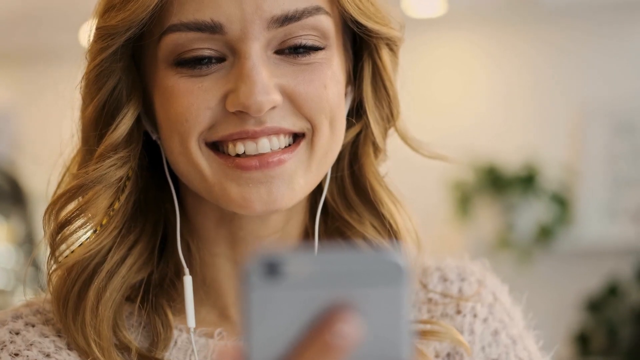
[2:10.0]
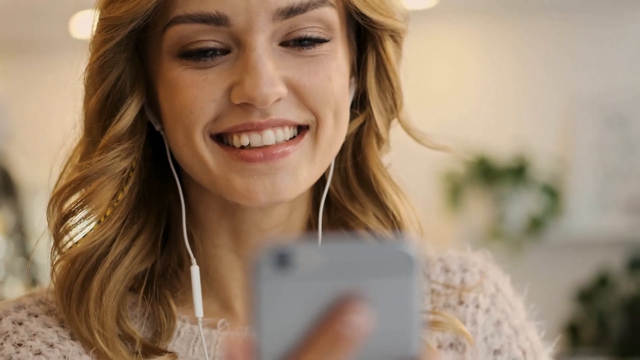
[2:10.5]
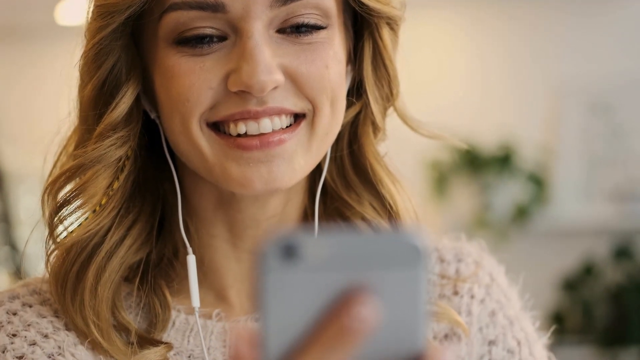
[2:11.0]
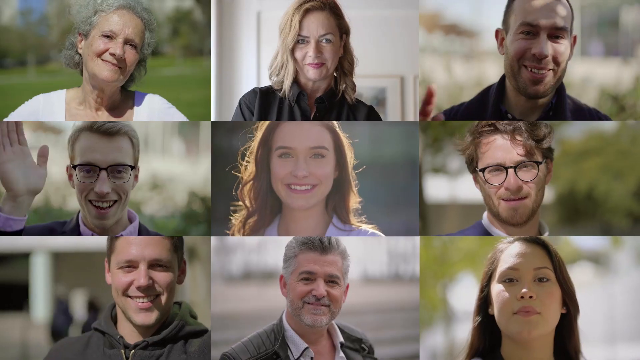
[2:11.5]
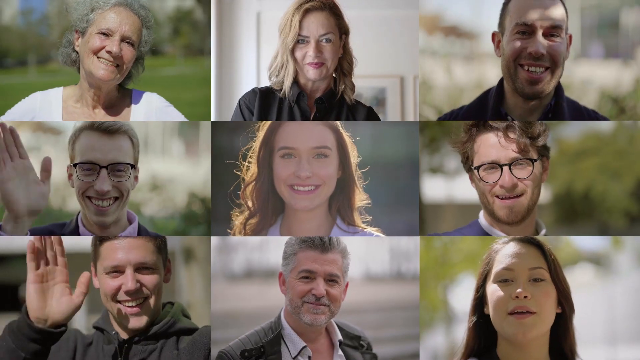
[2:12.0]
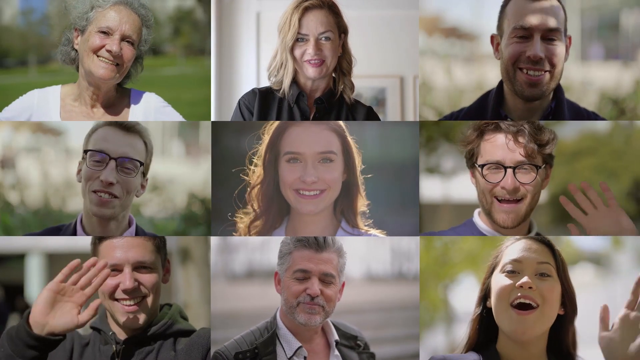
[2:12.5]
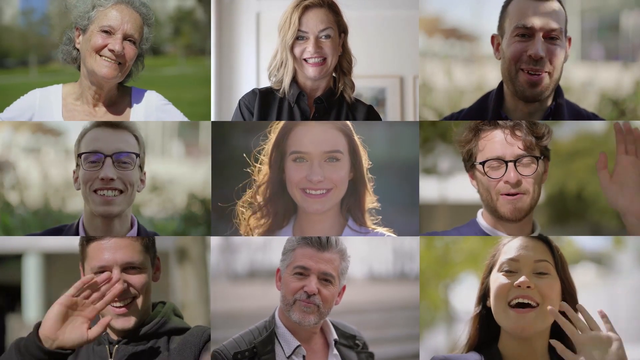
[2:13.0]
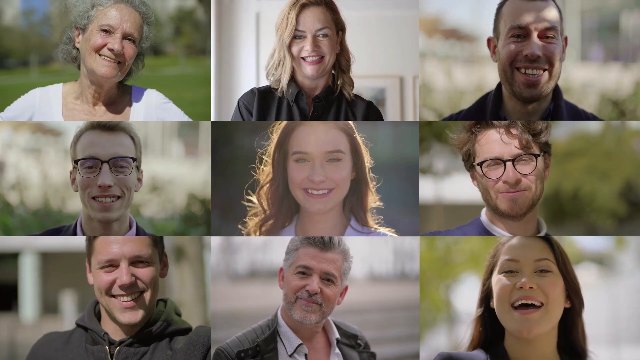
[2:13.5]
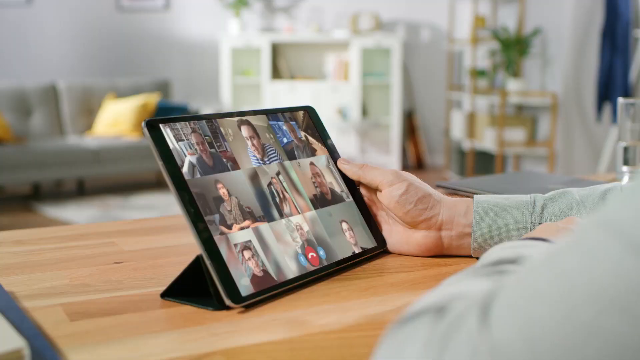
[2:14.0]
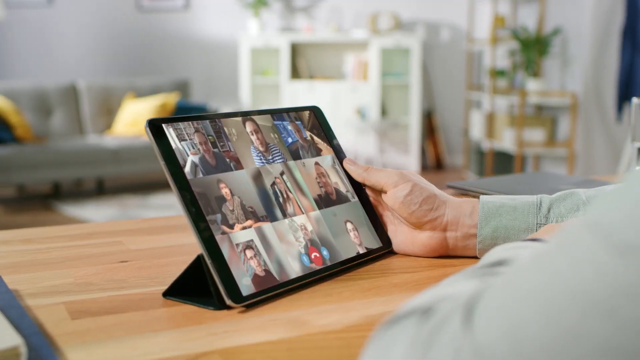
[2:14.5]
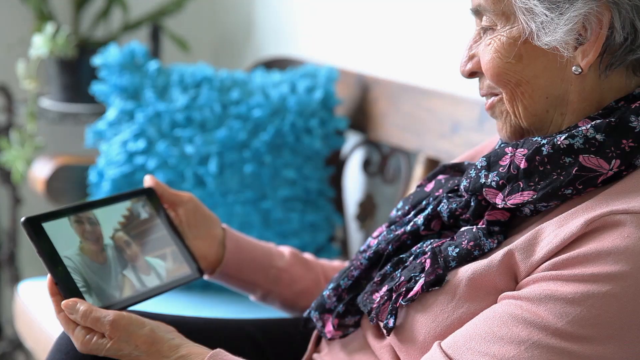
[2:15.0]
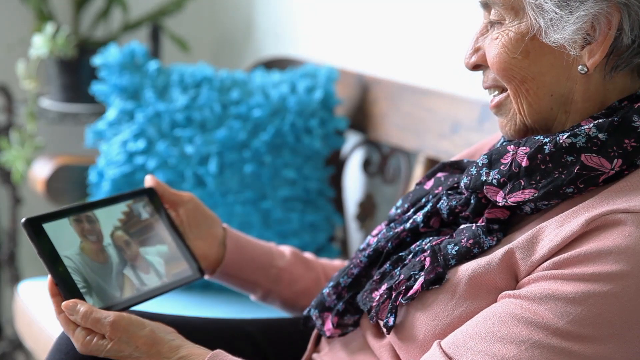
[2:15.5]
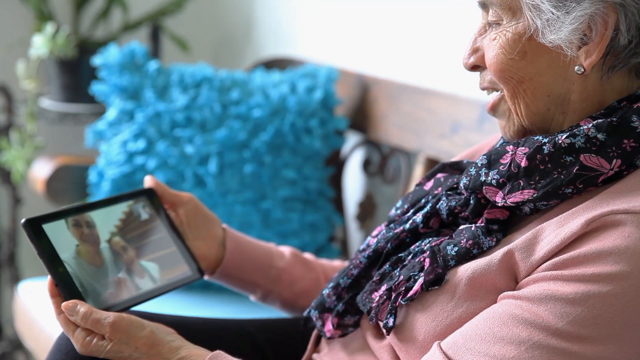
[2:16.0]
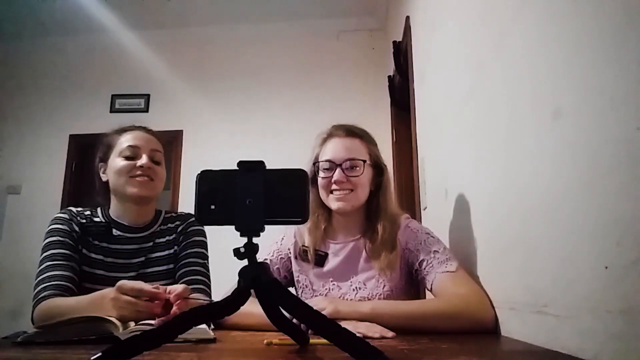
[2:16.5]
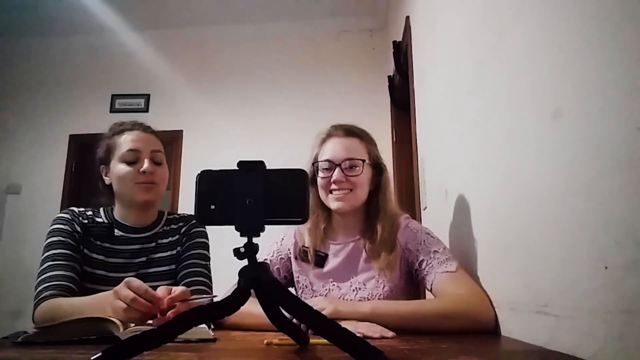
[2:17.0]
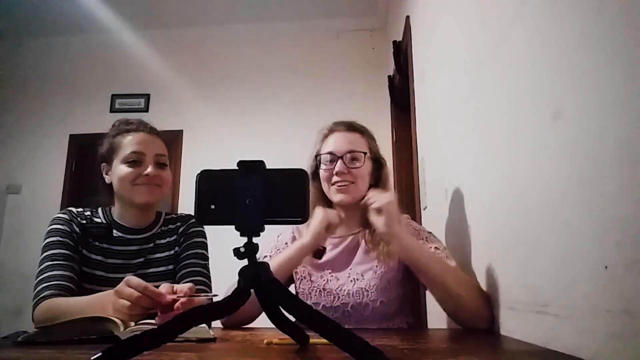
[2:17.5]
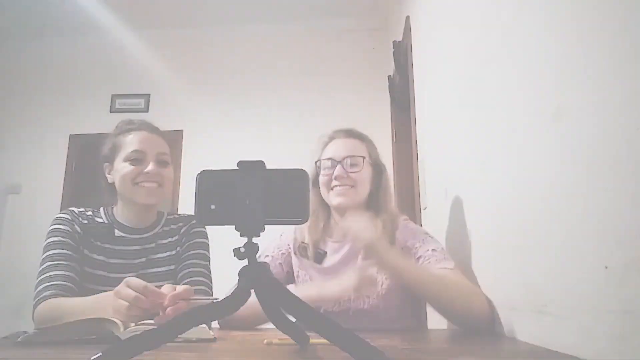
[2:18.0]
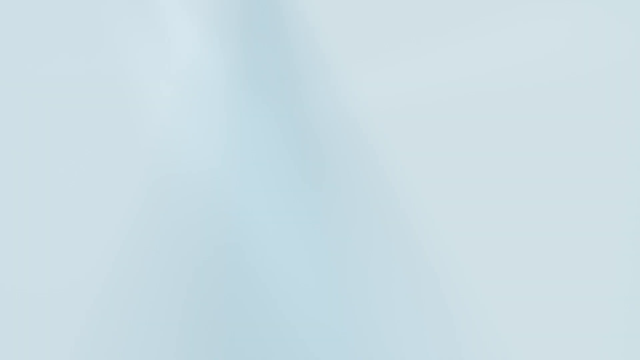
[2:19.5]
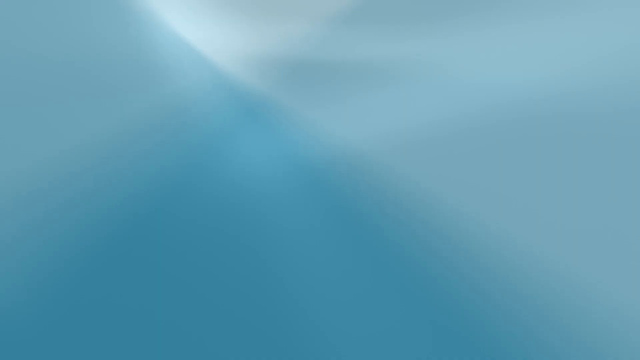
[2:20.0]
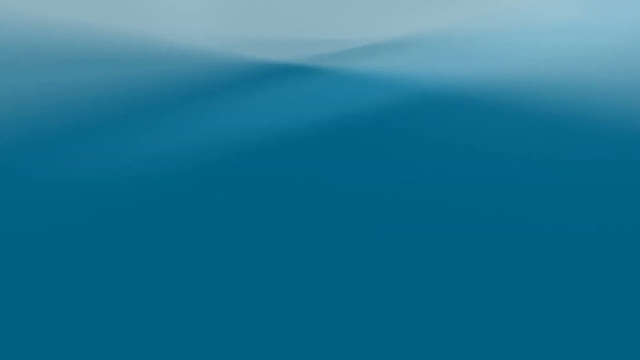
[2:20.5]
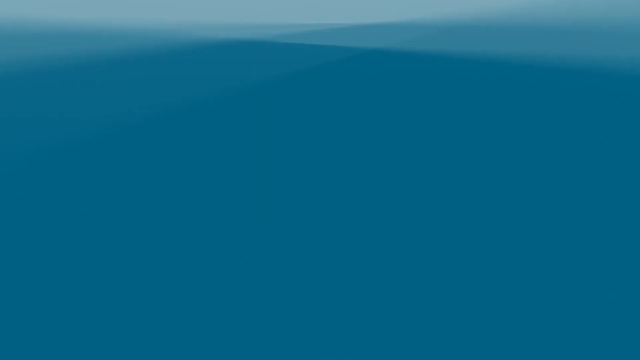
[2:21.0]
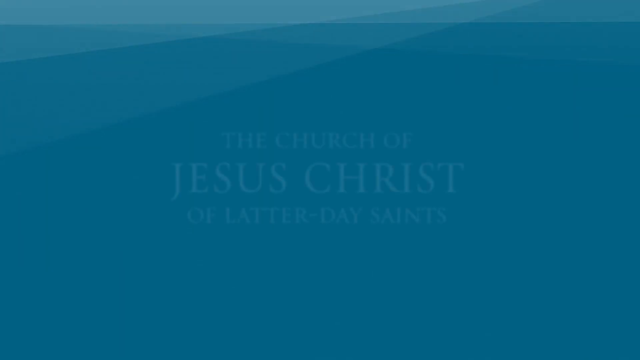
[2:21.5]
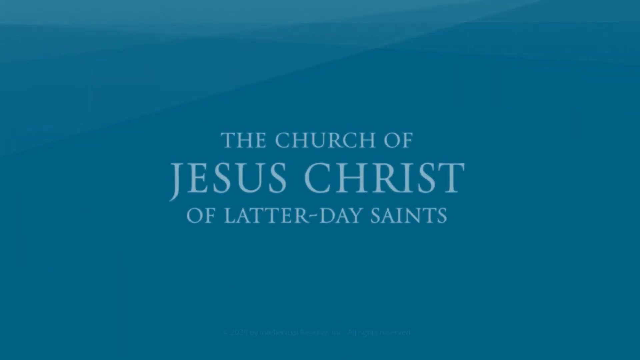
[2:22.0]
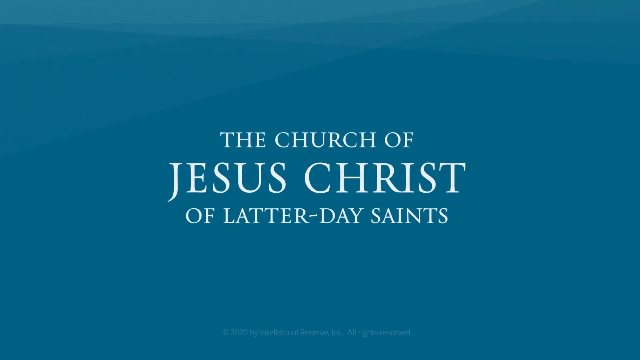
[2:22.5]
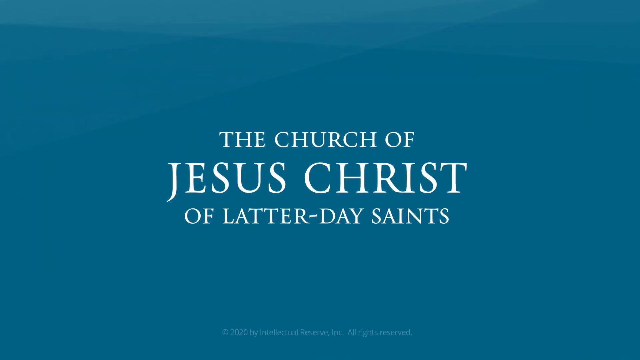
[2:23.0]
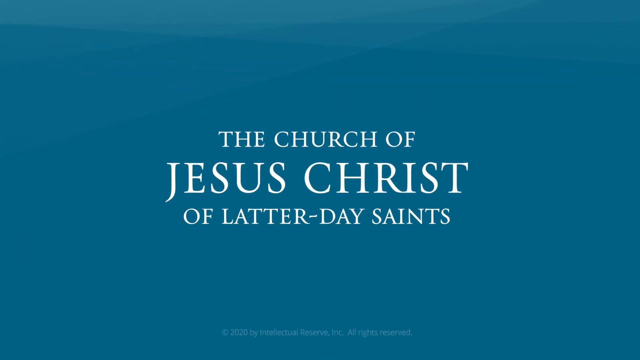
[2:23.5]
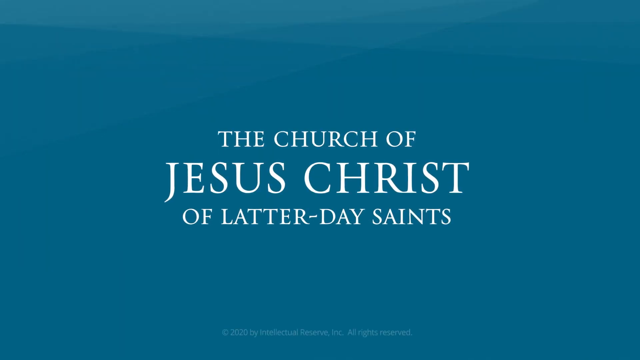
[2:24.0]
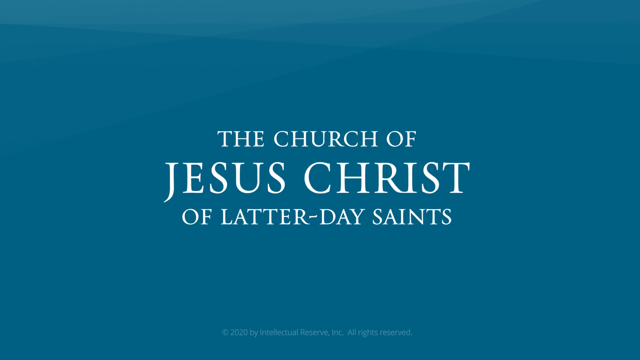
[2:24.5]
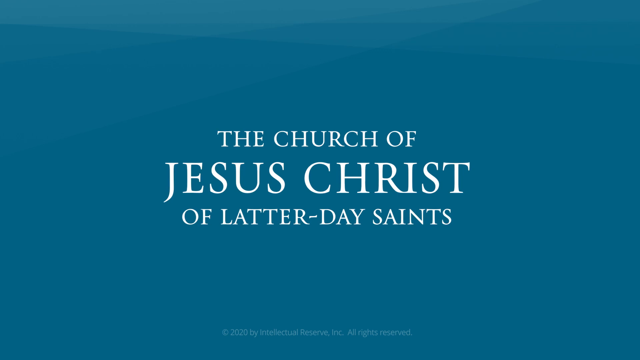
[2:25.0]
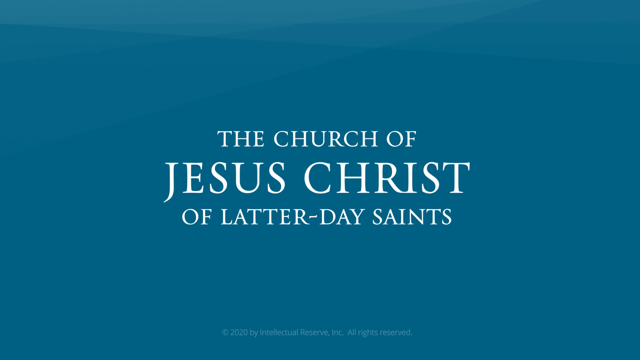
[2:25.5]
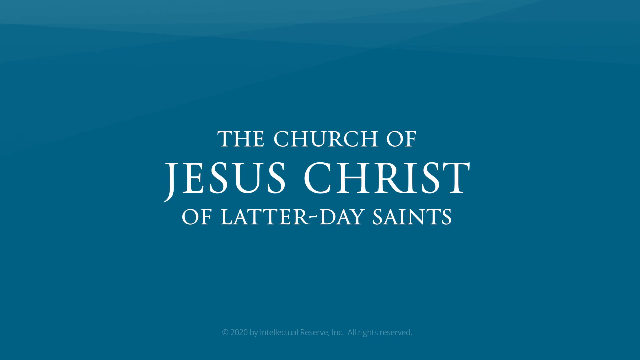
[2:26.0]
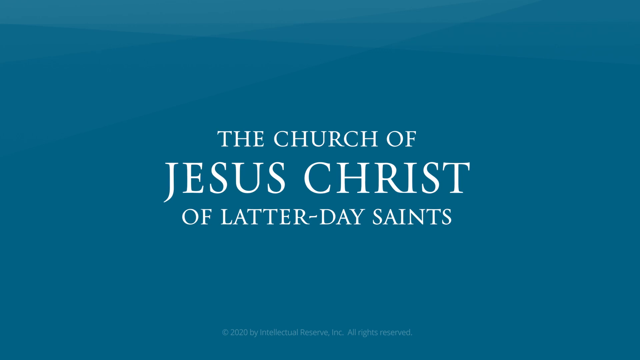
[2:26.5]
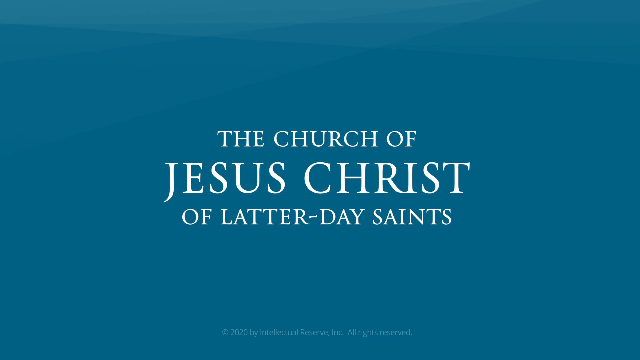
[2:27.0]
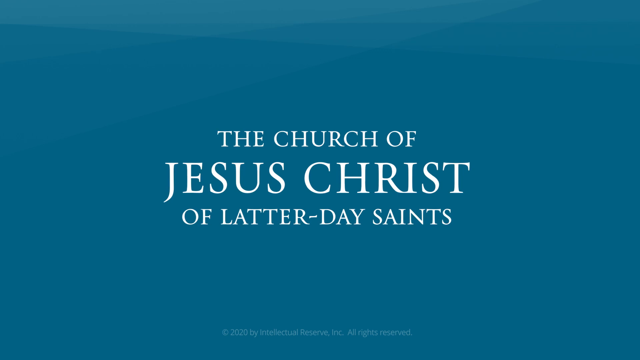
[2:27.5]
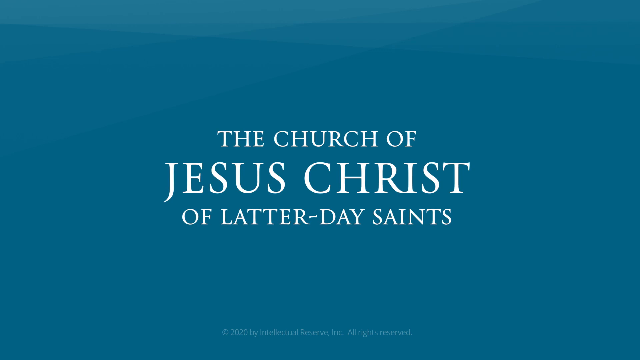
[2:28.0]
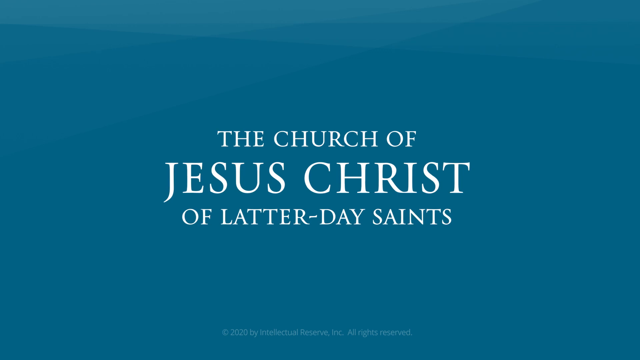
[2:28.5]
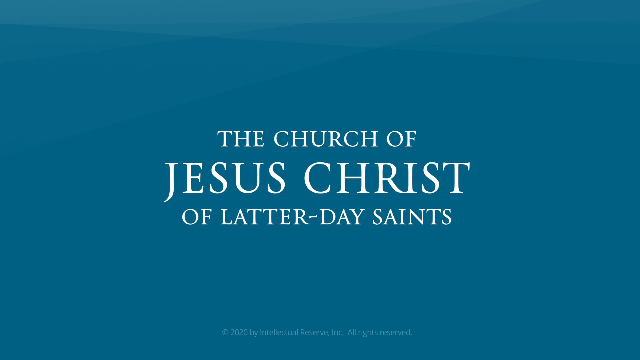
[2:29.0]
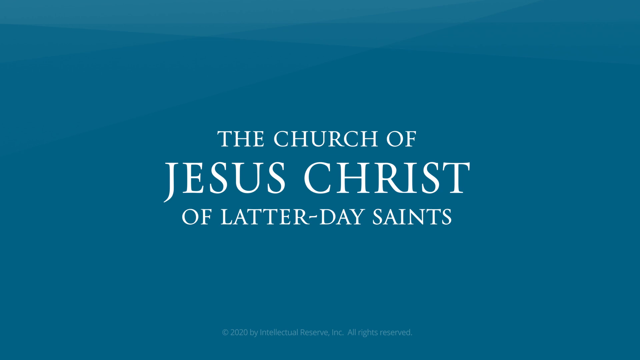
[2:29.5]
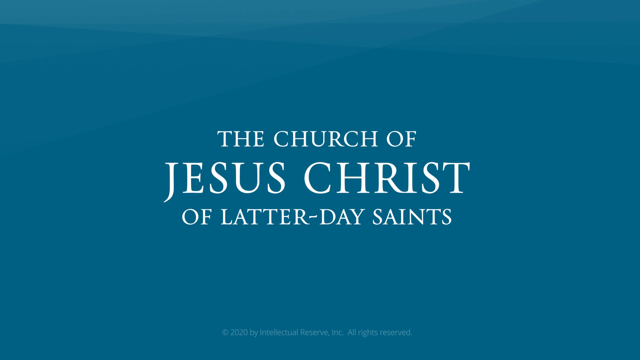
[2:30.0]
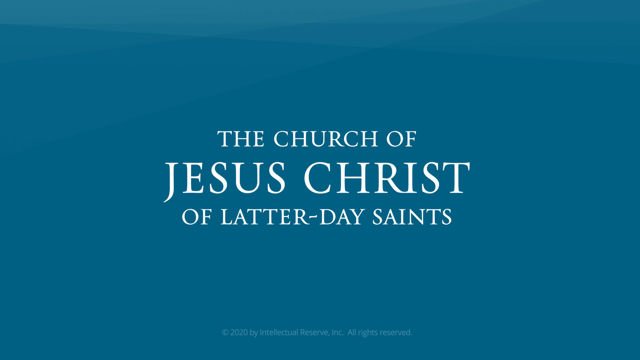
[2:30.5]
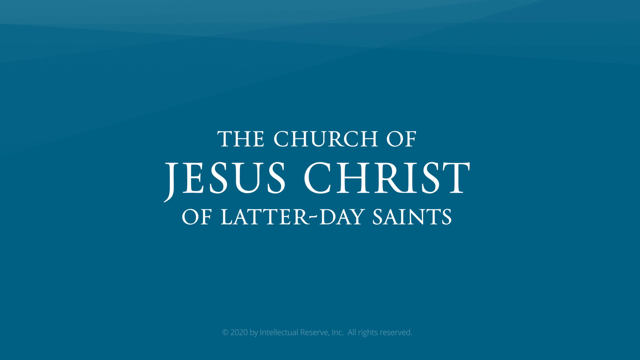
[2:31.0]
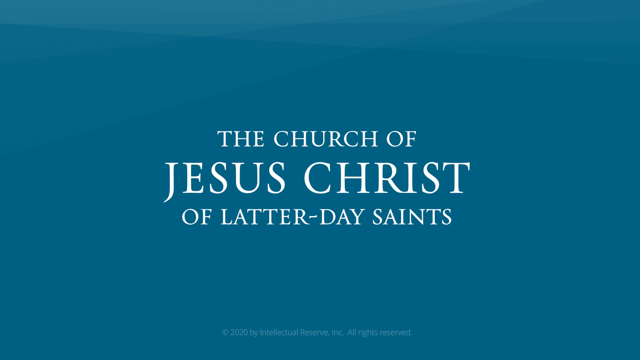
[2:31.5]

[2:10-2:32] The text "Quorum of the Twelve Apostles" and "Voice of Dieter F. Uchtdorf" appears. A blonde woman with white earbuds wired to her phone smiles at her phone. Something like a video meeting shows 12 people, all white, all smiling, some waving, all of them outside. Someone holds an iPad on a call with presumably the same 12 people, now all indoors. An older Black woman talks to someone on her tablet. Two girls or young women in a room with white walls and dark wooden doors have a camera turned sideways on a tripod and seem to be talking to someone. The screen goes white, then blue, with the text "The Church of Jesus Christ of Latter-day Saints."